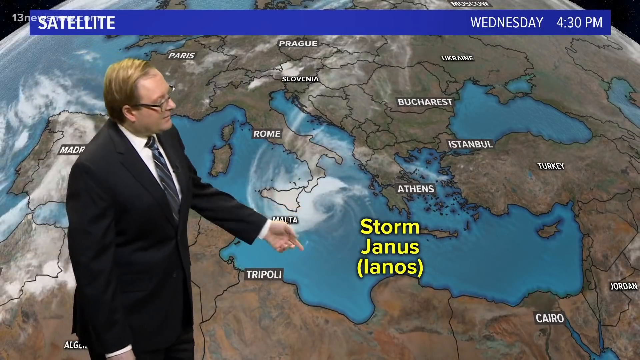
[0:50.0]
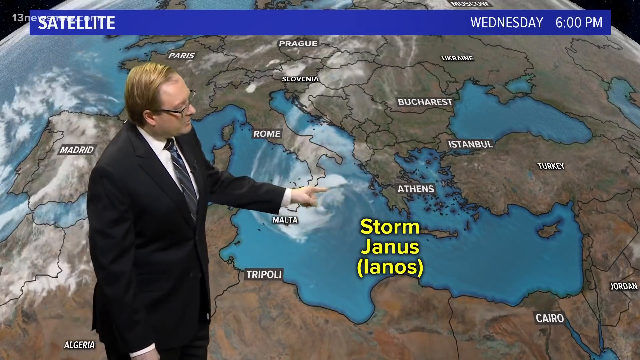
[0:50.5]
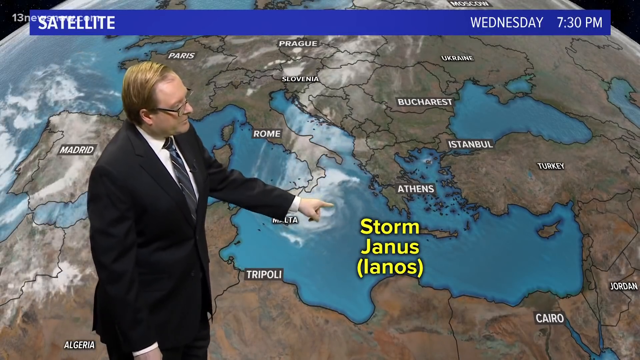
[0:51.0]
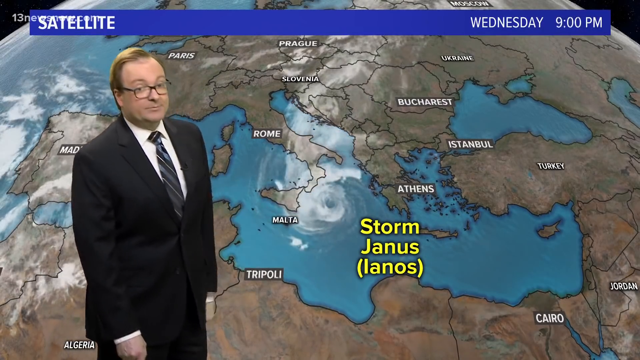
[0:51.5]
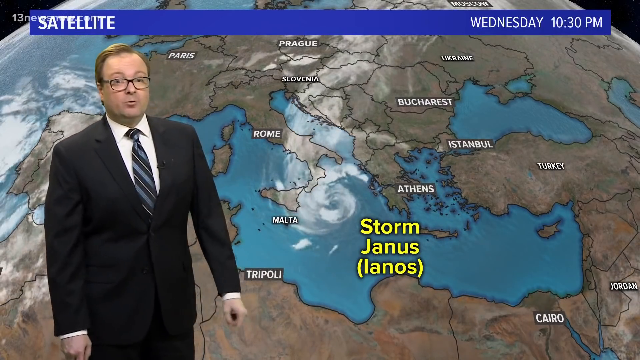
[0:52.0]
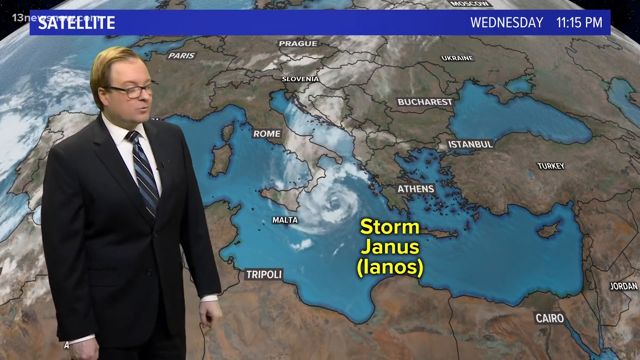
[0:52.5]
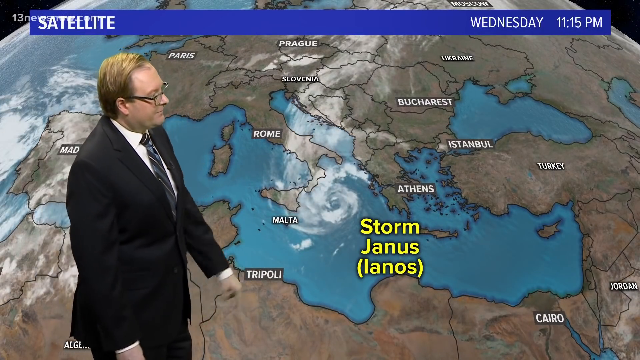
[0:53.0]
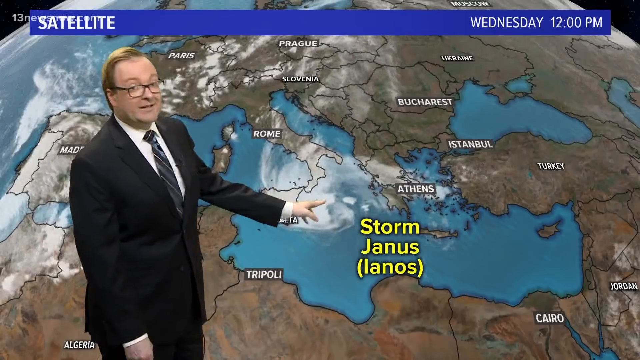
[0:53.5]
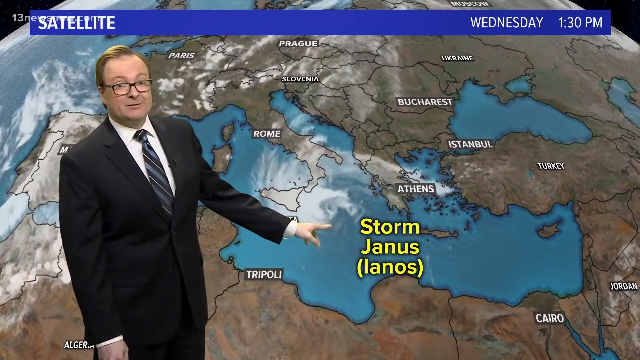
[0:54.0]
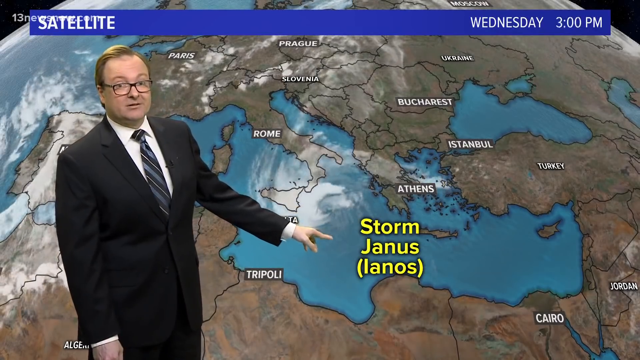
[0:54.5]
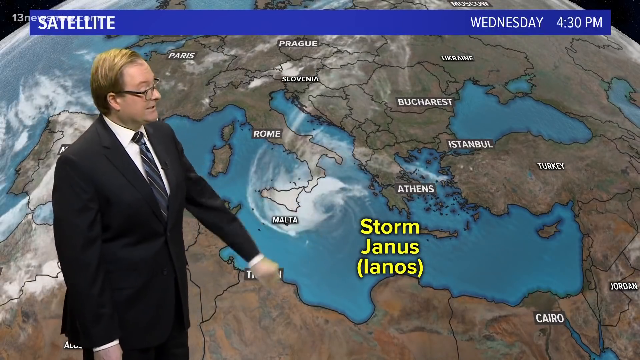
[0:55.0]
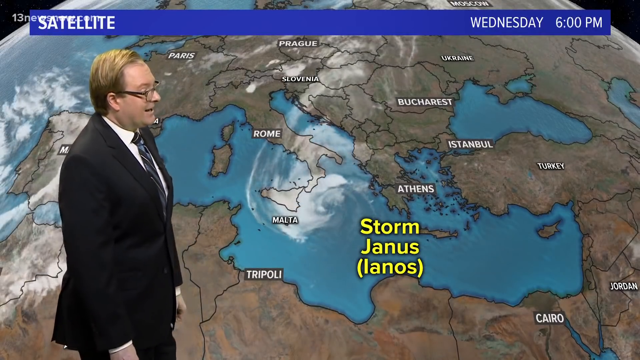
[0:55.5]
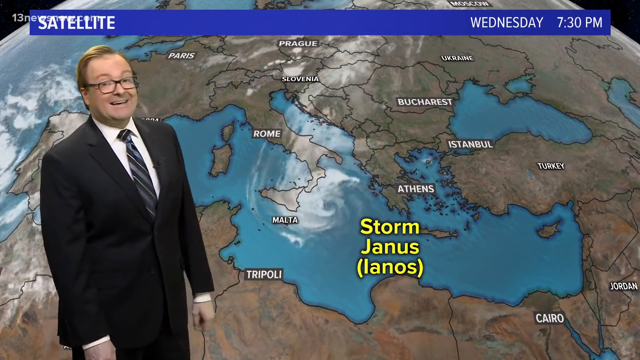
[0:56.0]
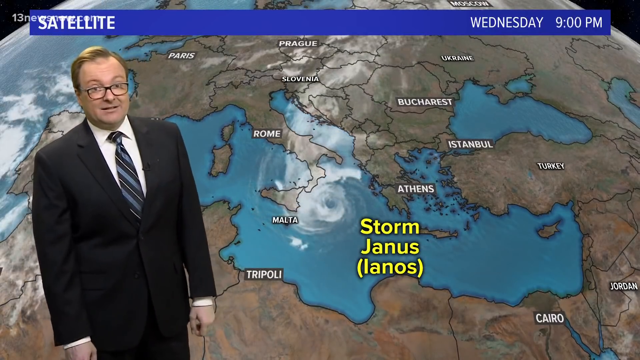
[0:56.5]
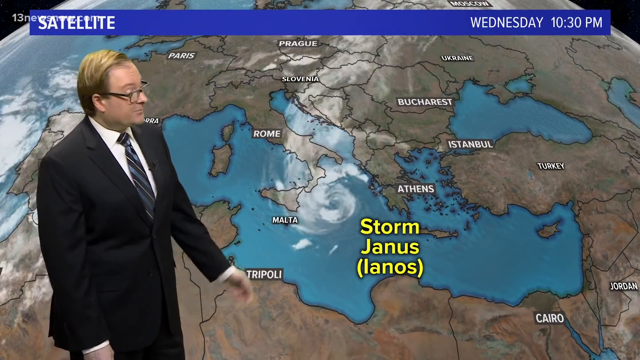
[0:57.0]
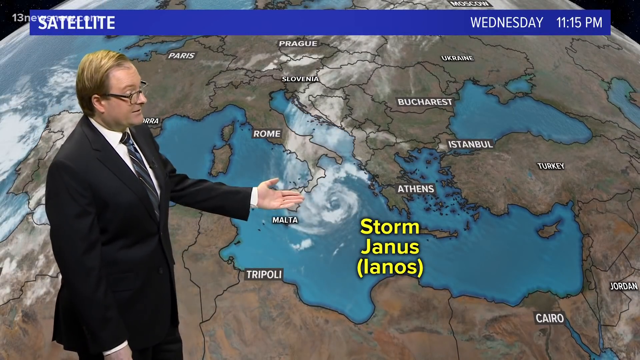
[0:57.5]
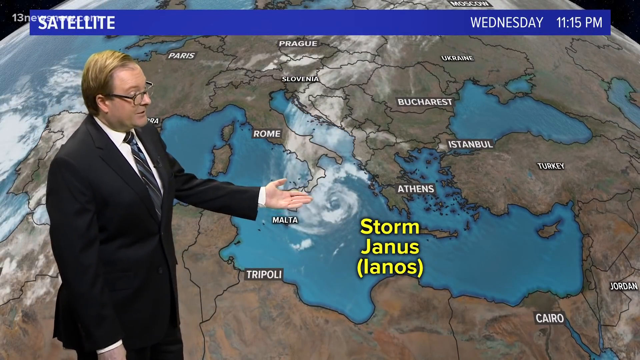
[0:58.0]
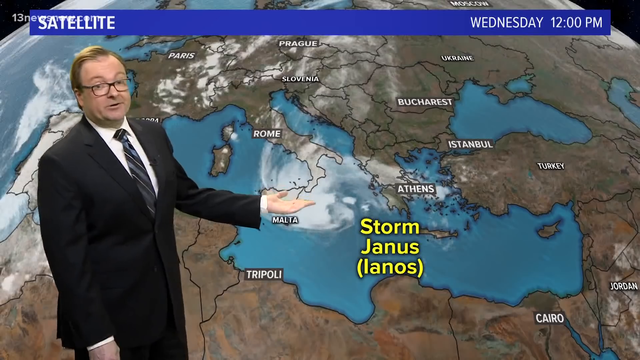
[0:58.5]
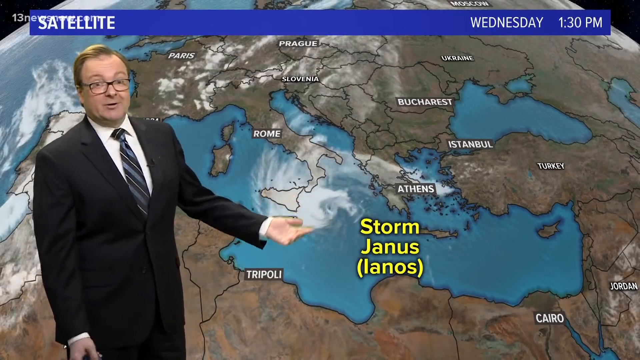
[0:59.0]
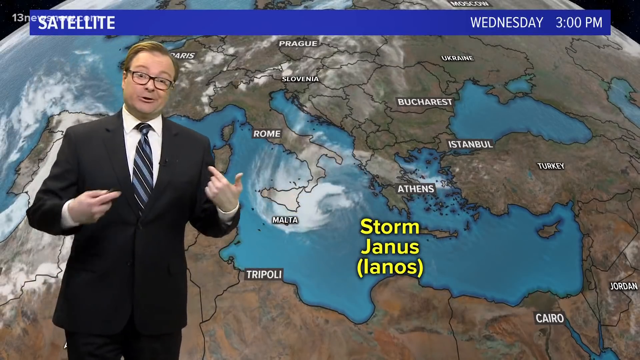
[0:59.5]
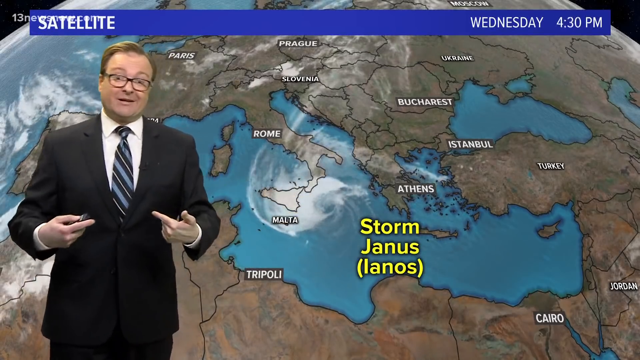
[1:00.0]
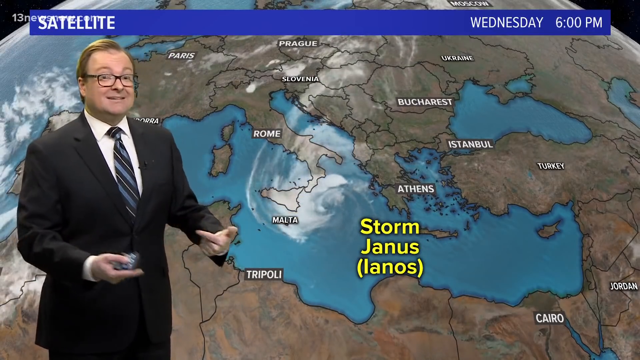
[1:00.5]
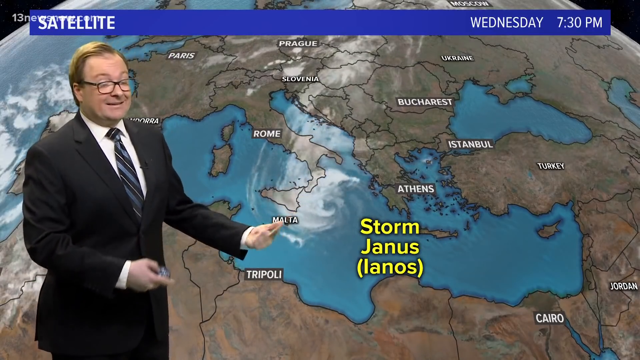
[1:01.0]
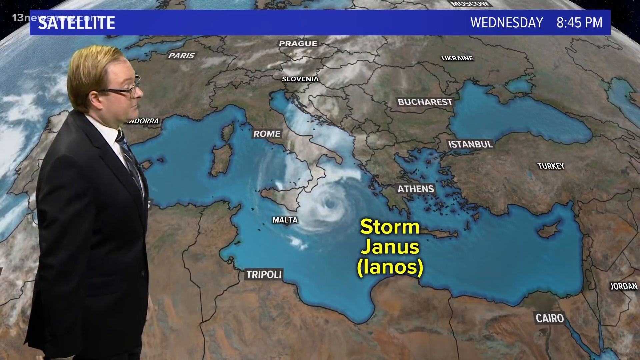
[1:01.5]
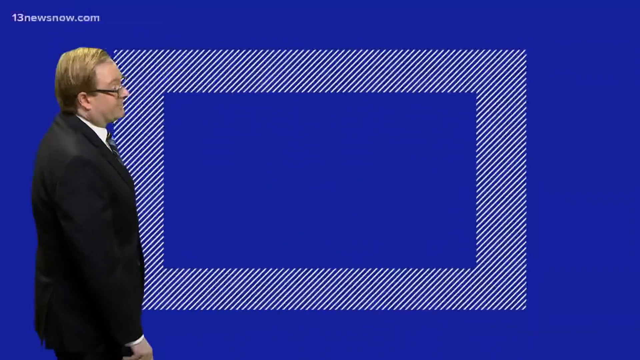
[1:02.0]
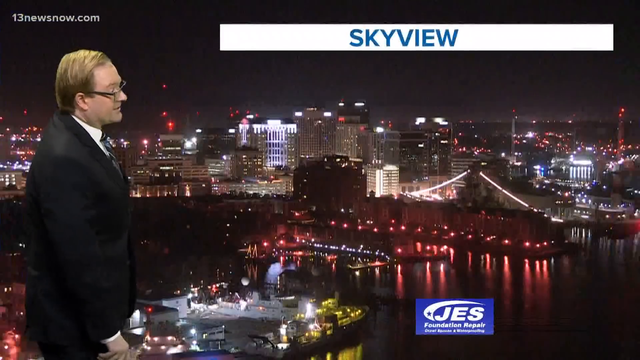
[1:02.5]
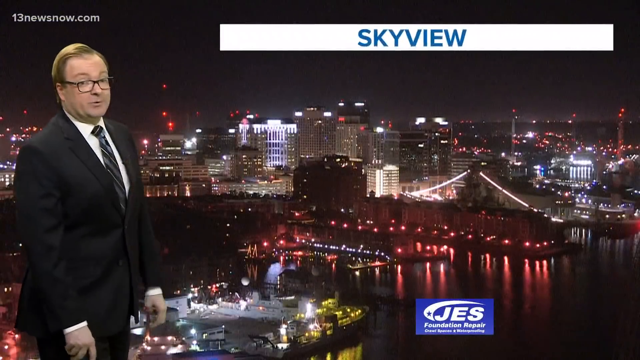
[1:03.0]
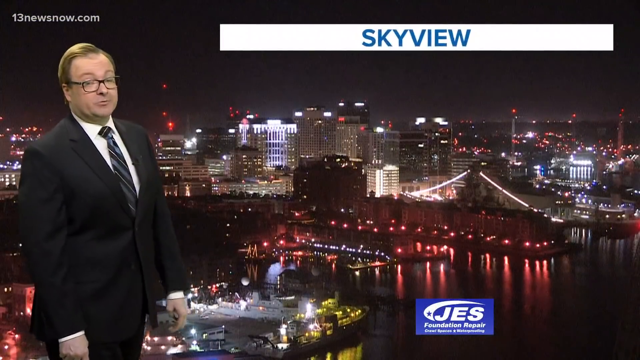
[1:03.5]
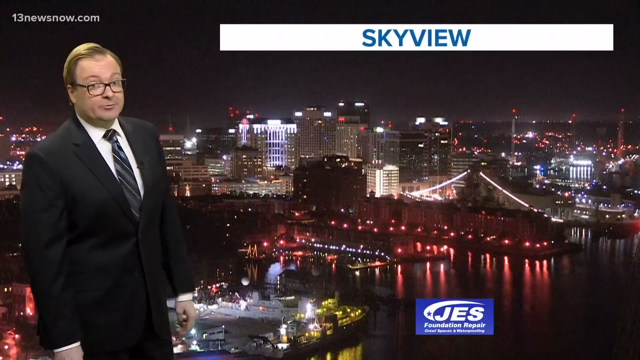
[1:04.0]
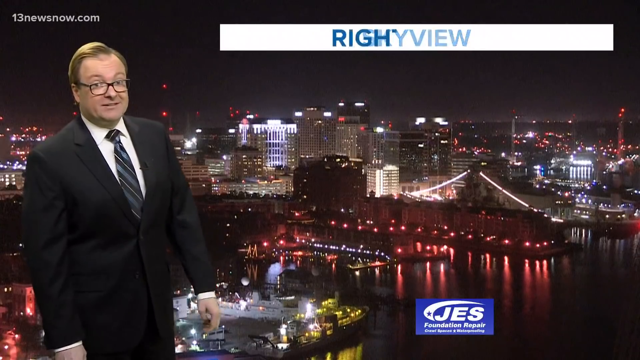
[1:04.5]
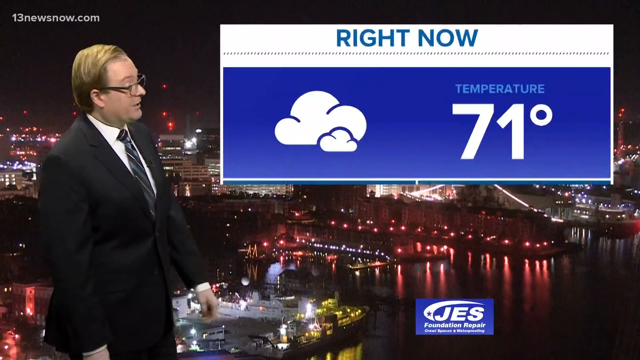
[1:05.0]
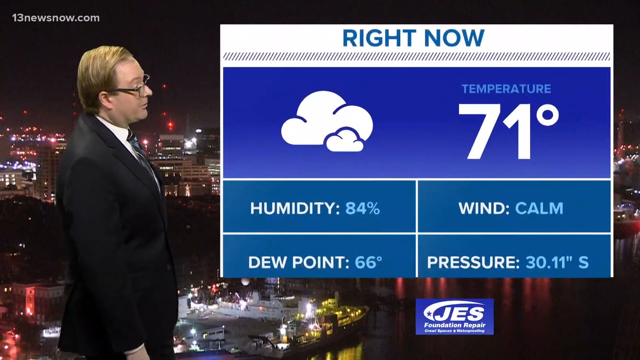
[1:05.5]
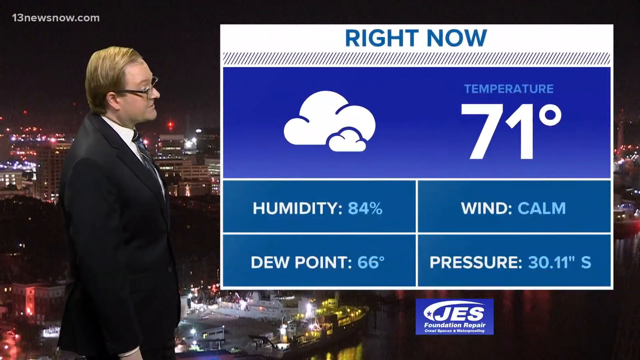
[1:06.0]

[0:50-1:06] The reporter focuses on Malta and its weather conditions, appearing serious since the subject concerns storms, and uses hand gestures while describing the place. The scene then moves to Skyville, where the reporter's background is a well-lit area with red and white lights and many skyscrapers behind; some buildings are painted white, others in different colours, and some are small. The weather for Skyville is then shown: temperature 71 degrees, wind calm, pressure 30.11, dew point 65 and humidity 86.